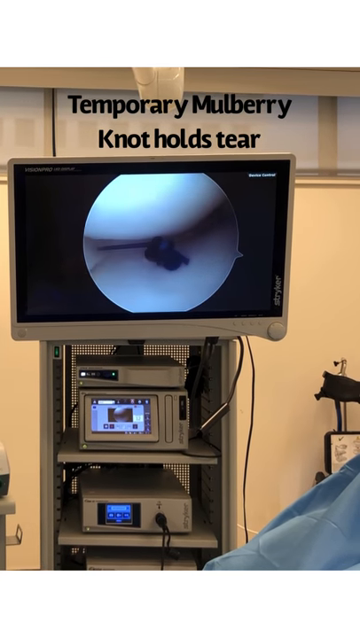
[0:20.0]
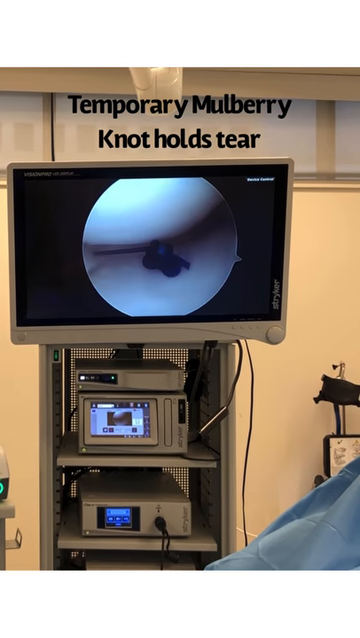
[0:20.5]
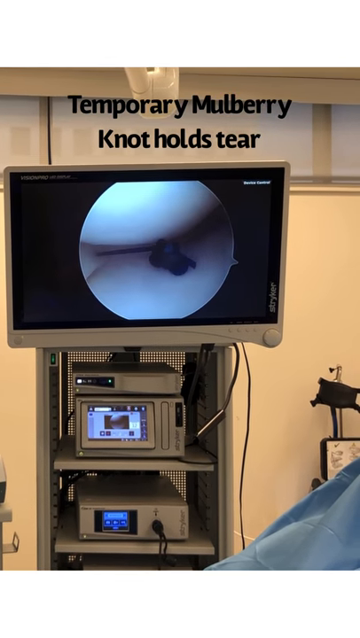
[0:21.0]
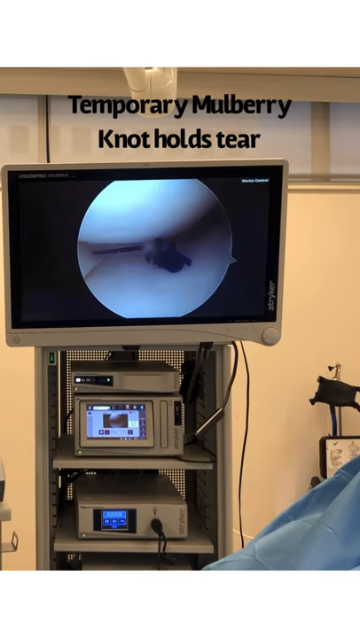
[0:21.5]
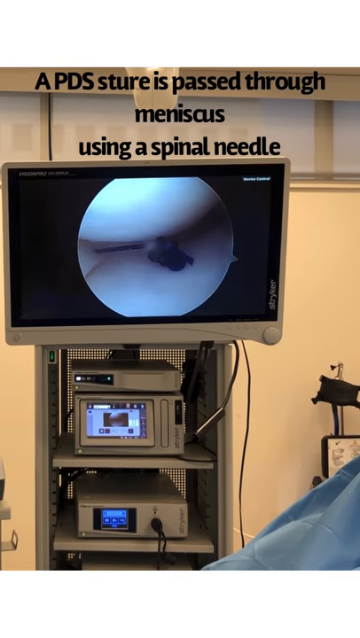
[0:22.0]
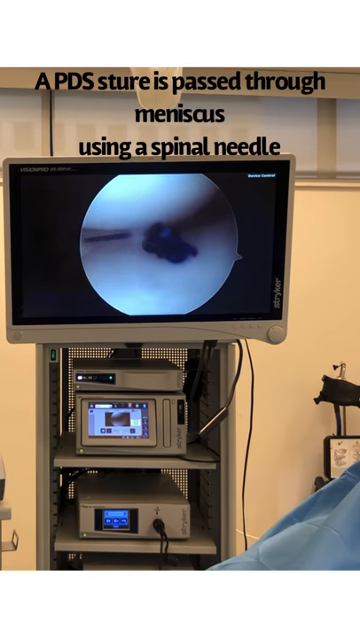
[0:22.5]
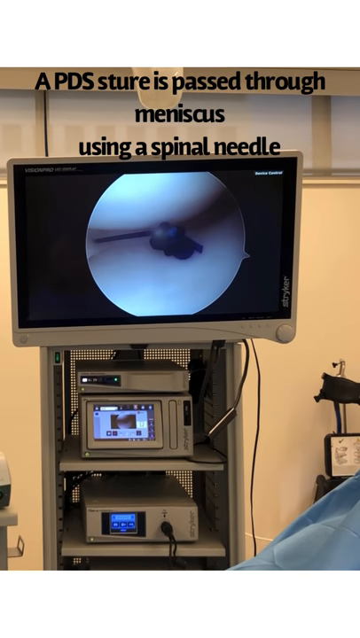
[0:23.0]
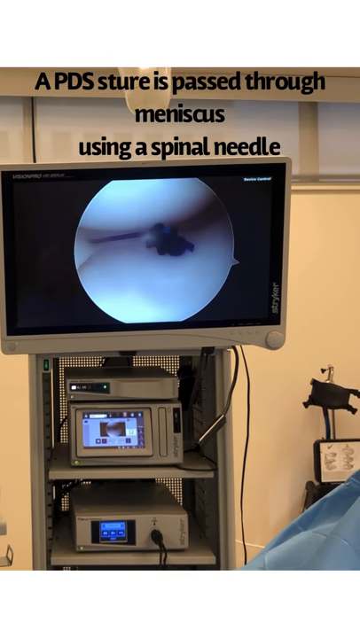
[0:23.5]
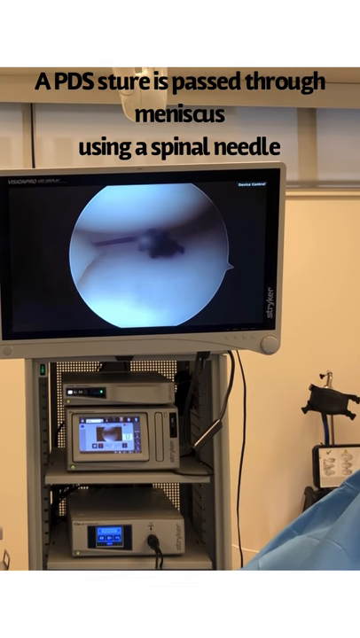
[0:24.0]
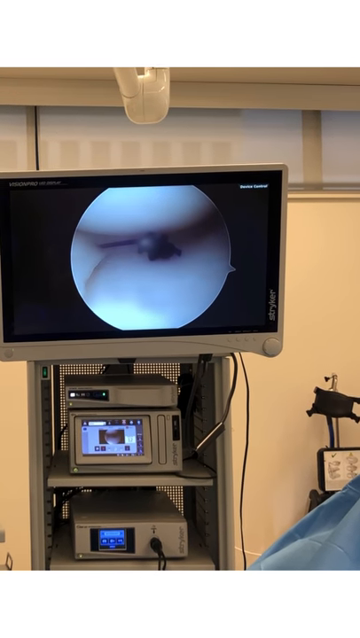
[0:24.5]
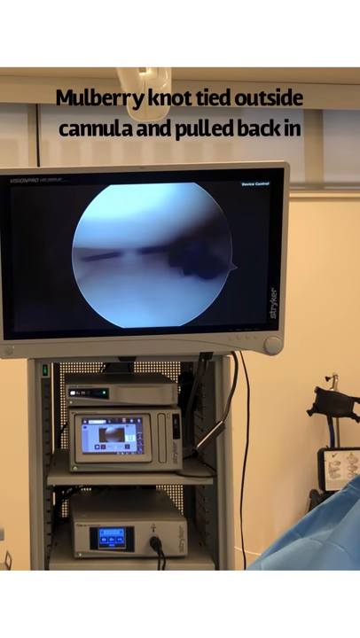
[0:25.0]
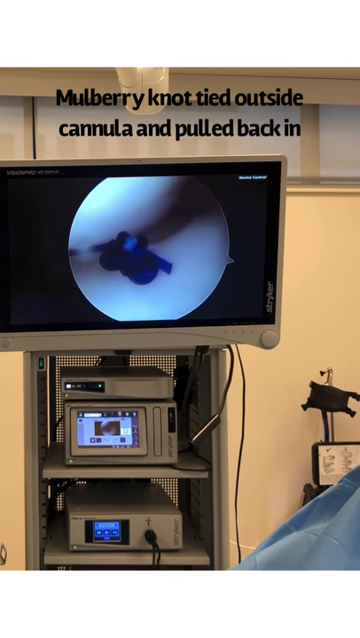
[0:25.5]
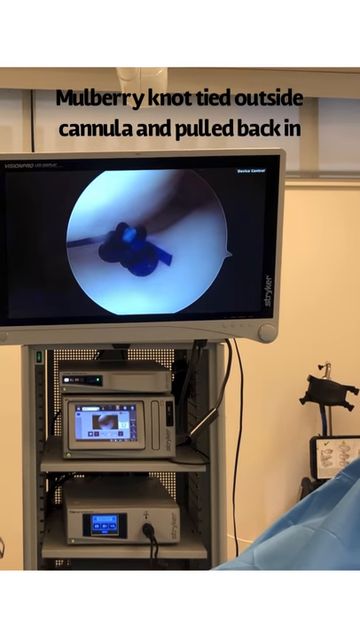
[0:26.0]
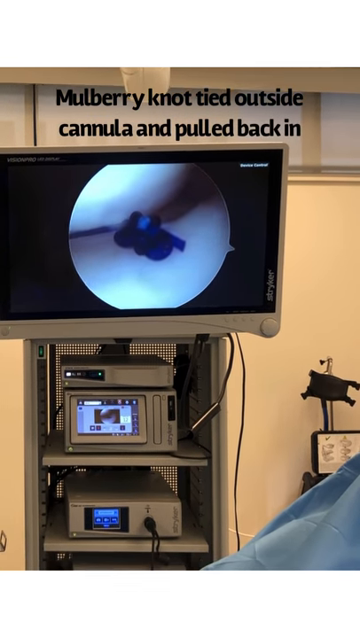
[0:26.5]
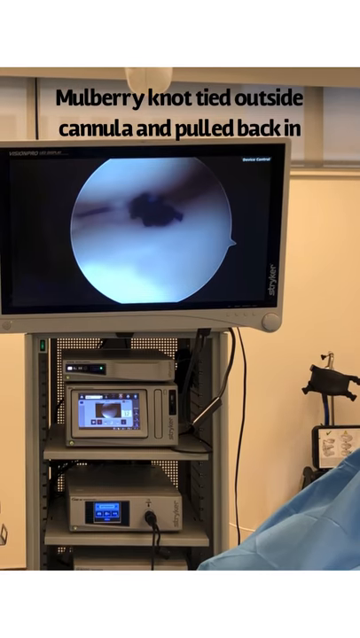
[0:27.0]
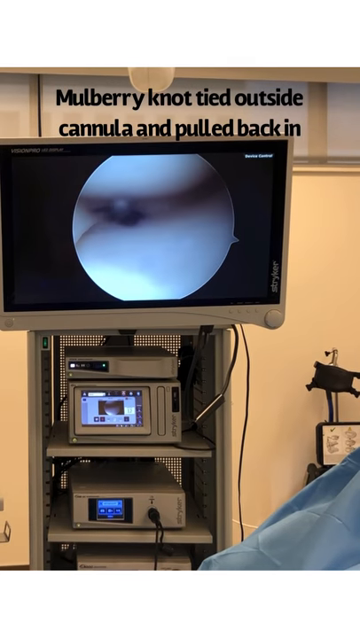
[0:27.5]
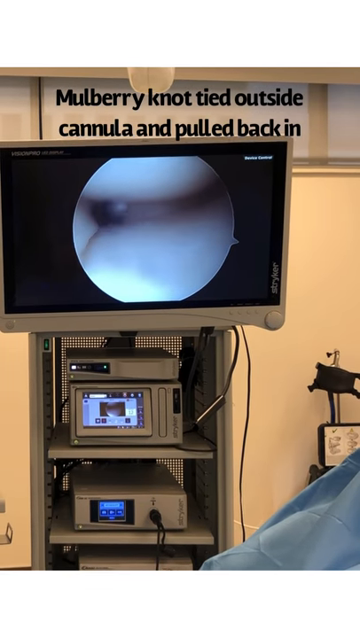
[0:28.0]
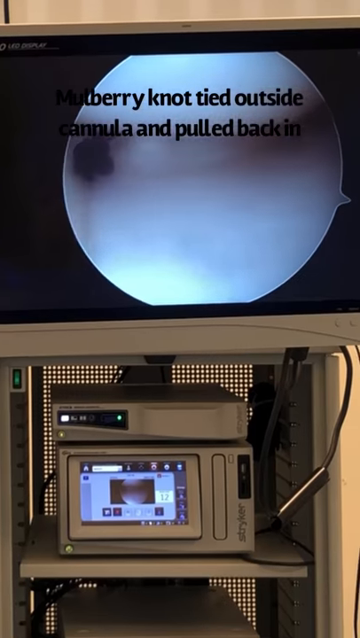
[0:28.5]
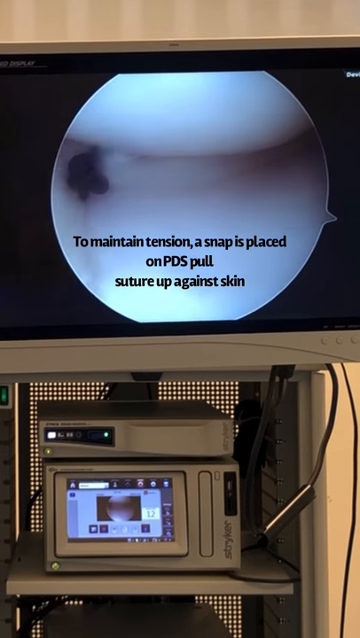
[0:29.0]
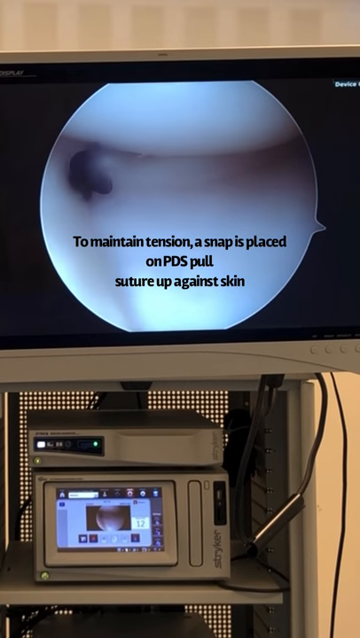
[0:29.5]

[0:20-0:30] A close-up of a computer monitor shows a surgical procedure in progress, with text above it reading "temporary mulberry knot holds tear." The view comes from a small camera inside the person being operated on, and it moves back and forth during the operation. Text appears above the monitor reading "a PDS suture is passed through meniscus using a spinal needle." A black knot of thread in the center of the screen moves back and forth and then pulls outward. Text is then placed on the image reading "to maintain tension, a snap is placed on PDS pull suture against skin."